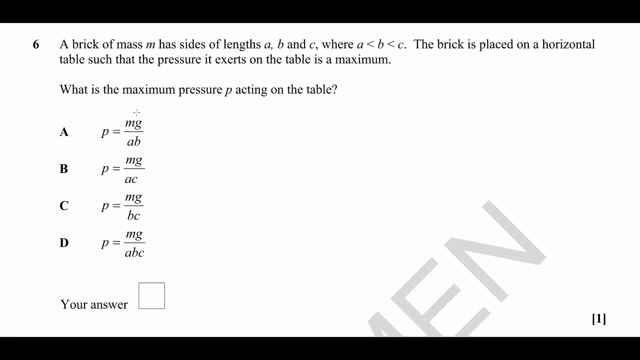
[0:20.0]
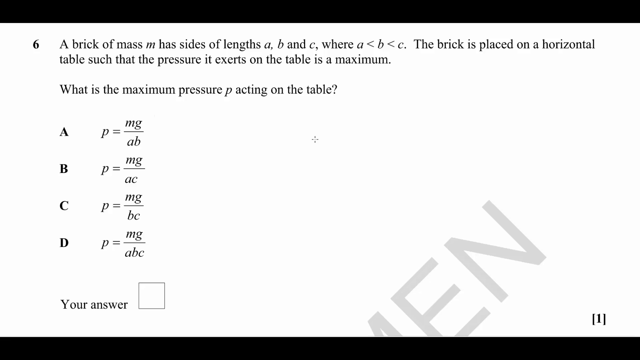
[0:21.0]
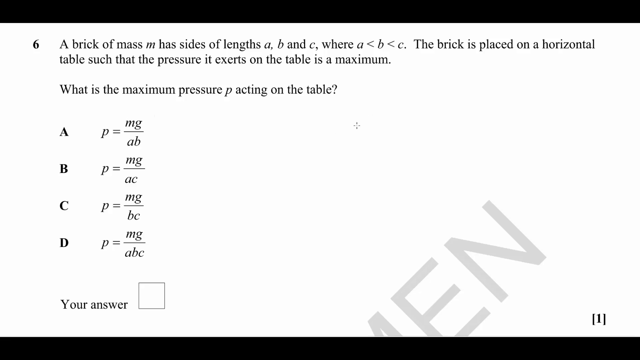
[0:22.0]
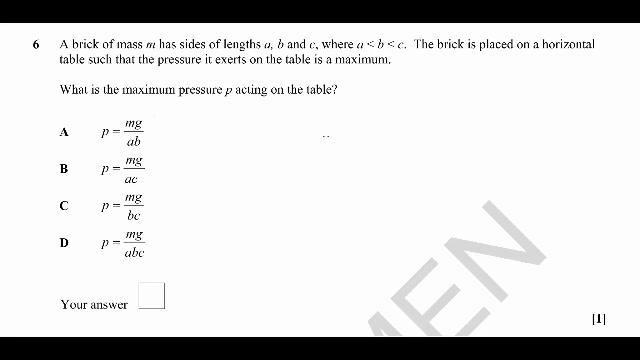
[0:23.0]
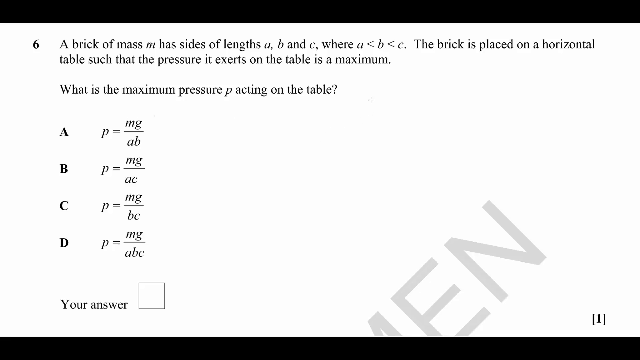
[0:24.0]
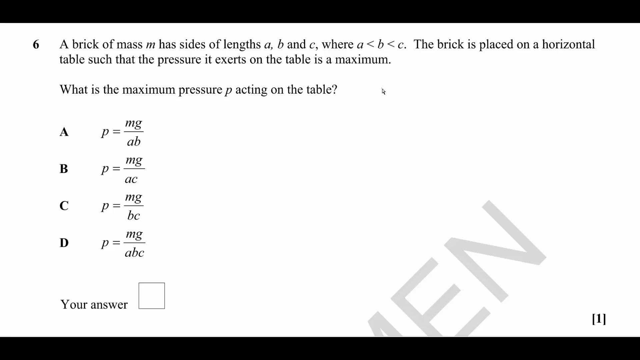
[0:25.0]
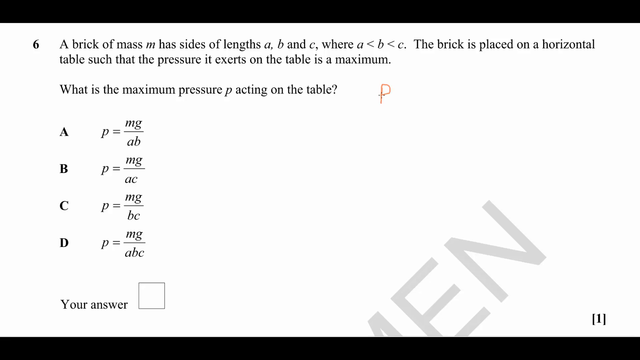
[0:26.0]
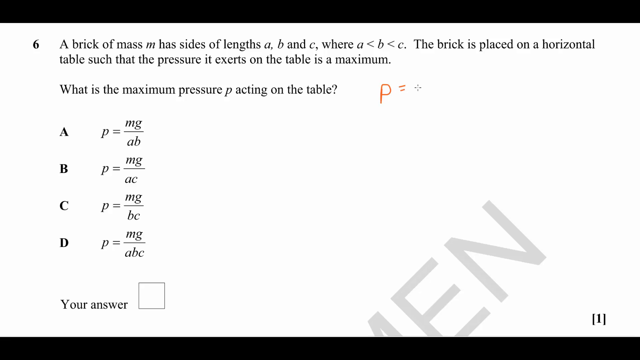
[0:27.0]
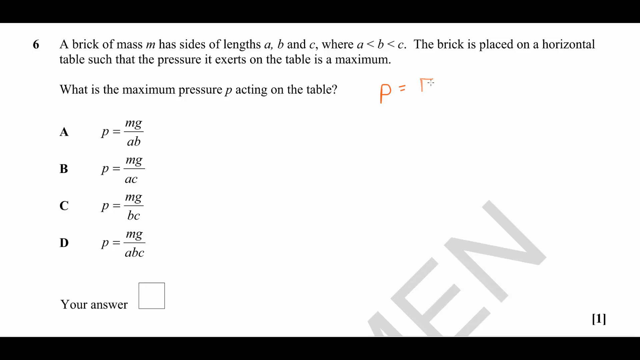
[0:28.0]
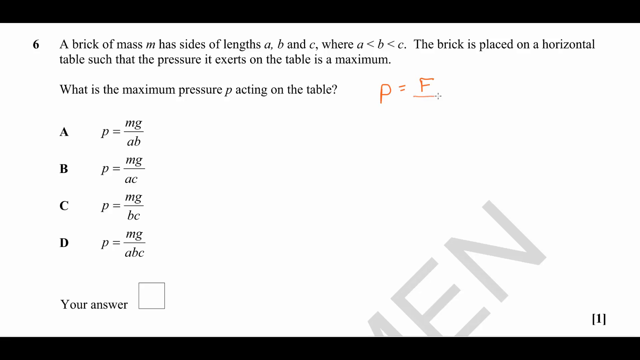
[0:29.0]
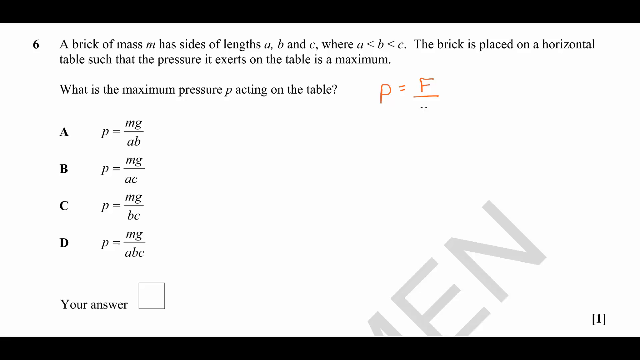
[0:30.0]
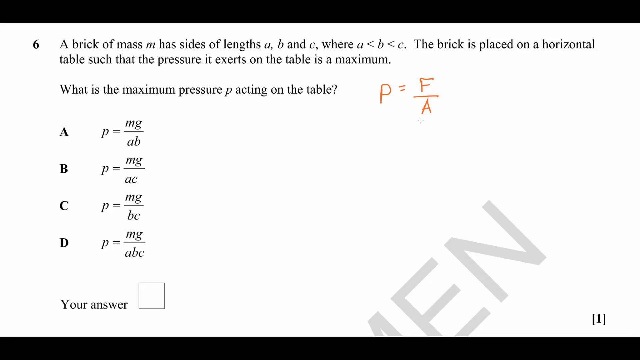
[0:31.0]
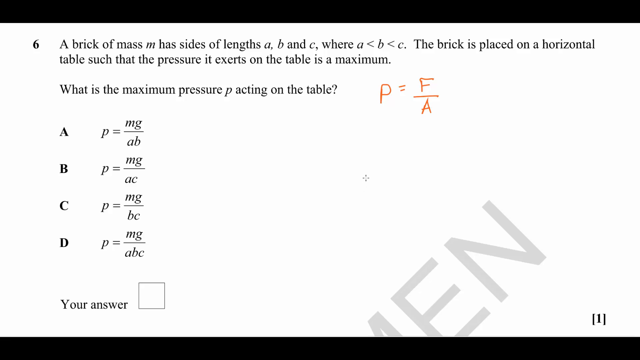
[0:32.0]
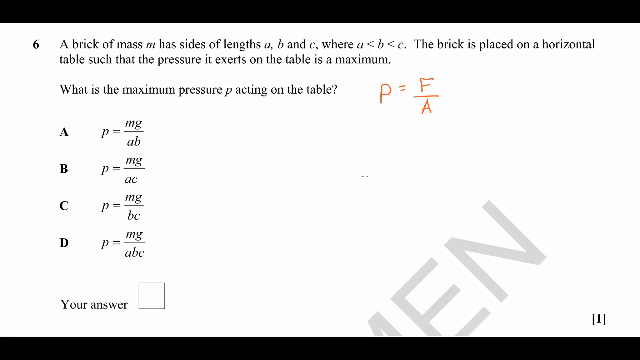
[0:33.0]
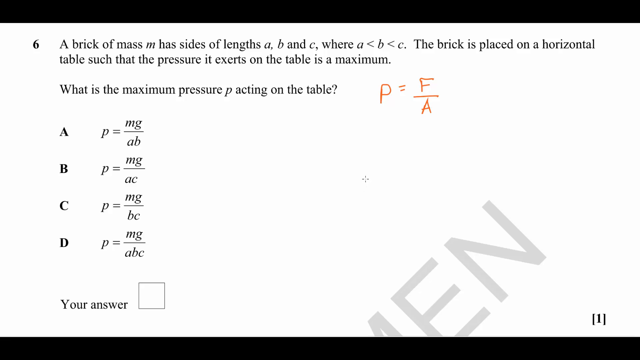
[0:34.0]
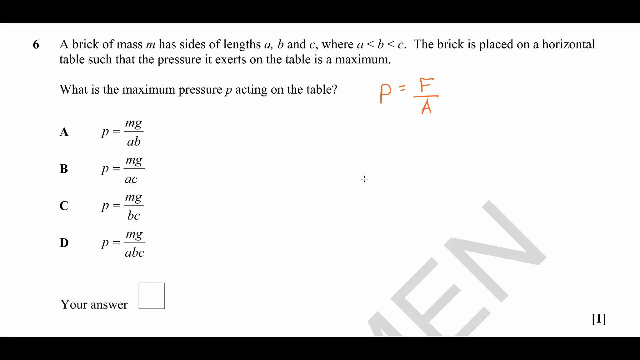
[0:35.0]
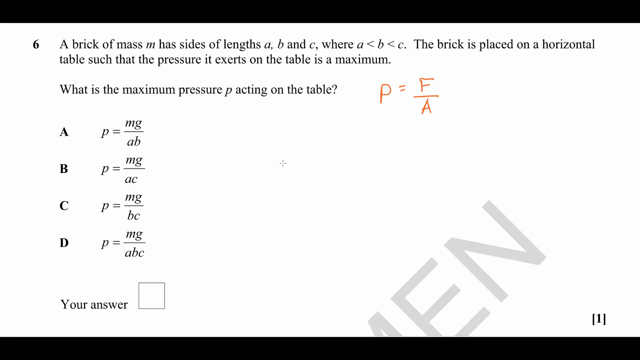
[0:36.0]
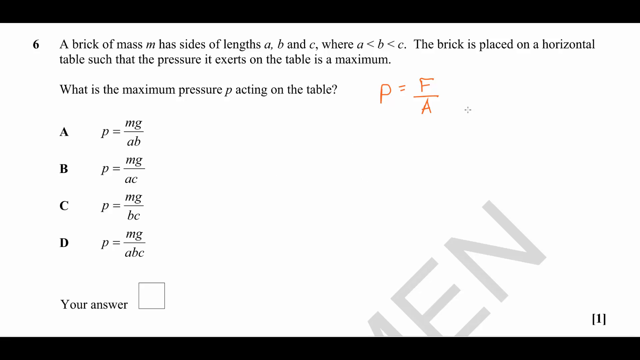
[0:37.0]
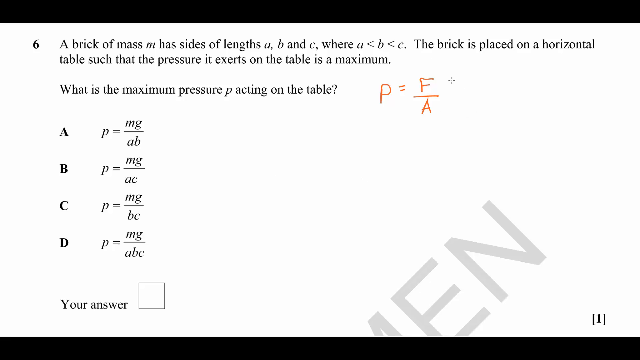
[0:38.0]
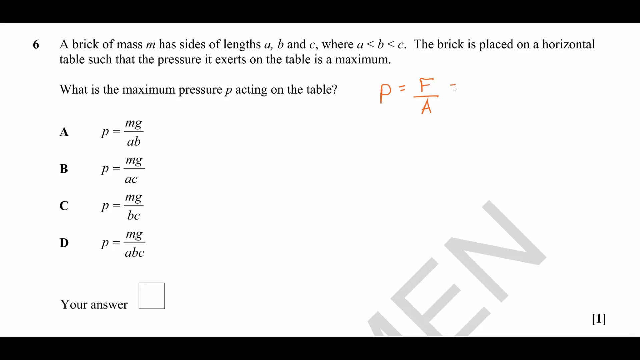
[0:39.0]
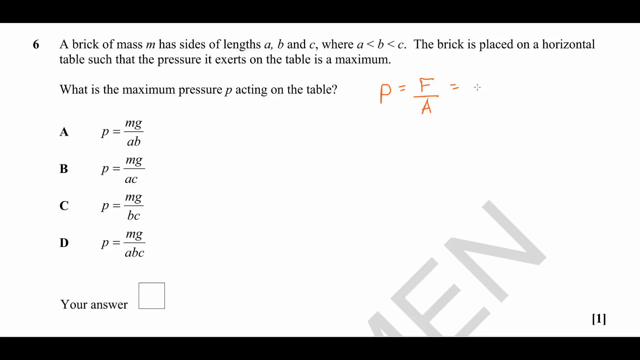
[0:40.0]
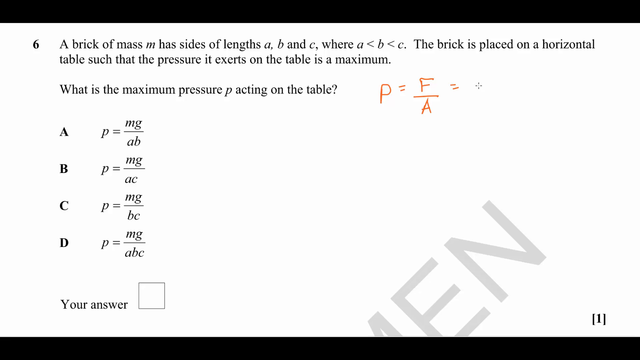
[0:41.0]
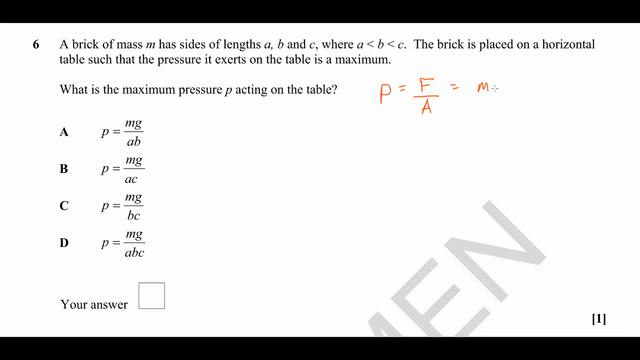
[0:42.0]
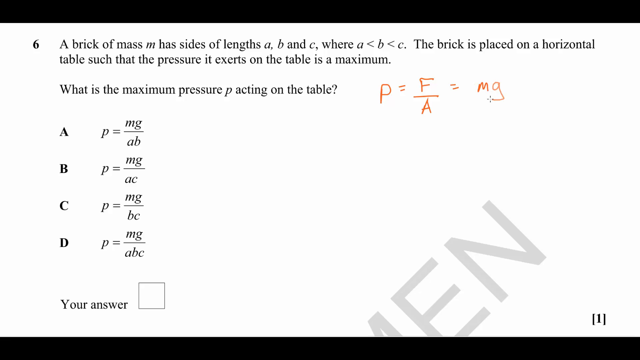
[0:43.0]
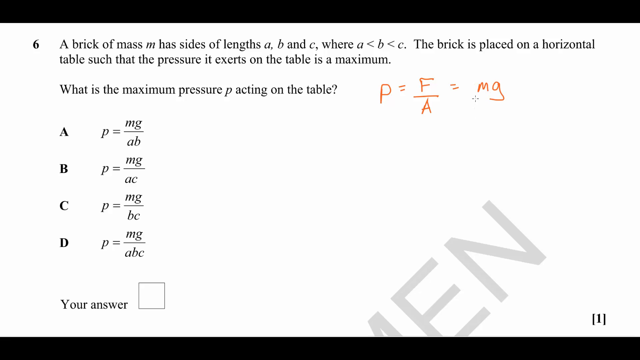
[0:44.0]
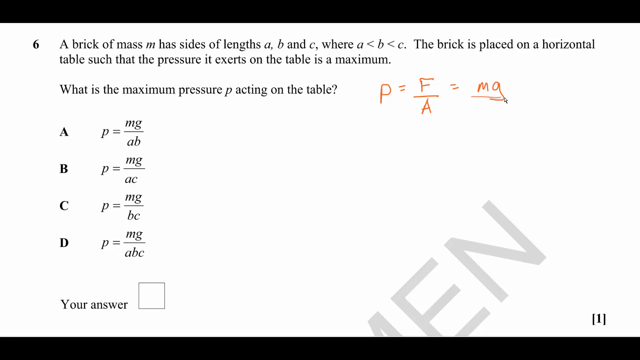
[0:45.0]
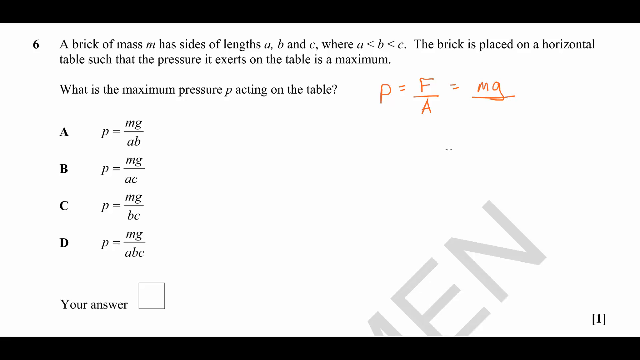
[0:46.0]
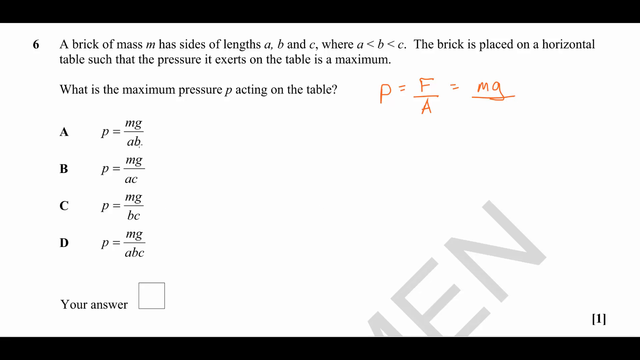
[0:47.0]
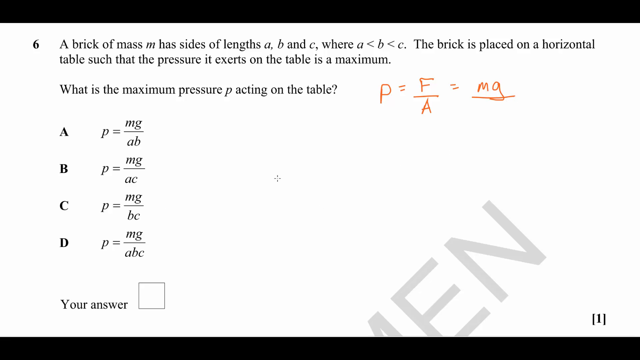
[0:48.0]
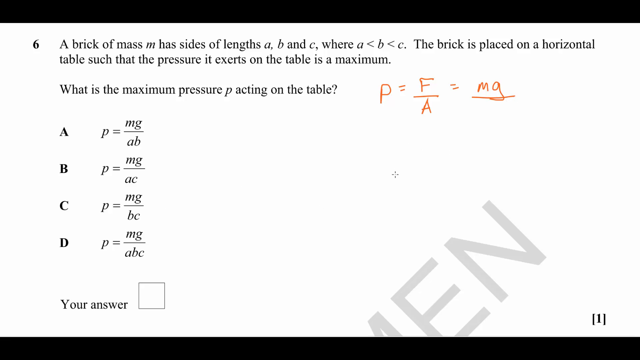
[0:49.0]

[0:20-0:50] The crosshair cursor moves over different parts of the screen, then turns into a red pen and draws "p = f/a", with f as the numerator and a as the denominator, near the center at the top of the screen. The crosshair looks to be a mouse pointer, so the writing is apparently done with a mouse rather than a pen or stylus. An equal sign is drawn to the right, followed by "mg" with a not very straight line under it to indicate that it is the numerator of a fraction. The crosshair then moves closer to the left side of the screen before settling near the center, seemingly reading the question or giving more information before the rest of the equation is written. The handwritten text is thin and reddish brown, contrasting with the black and white of the rest of the screen.